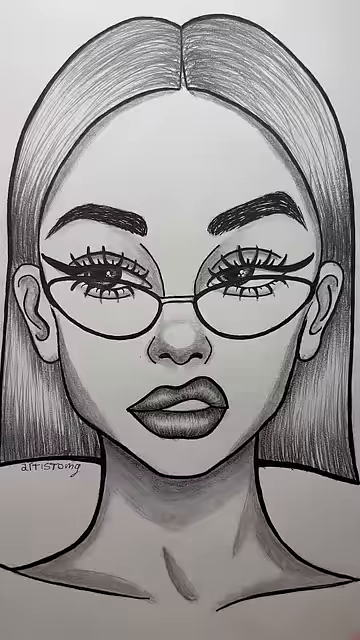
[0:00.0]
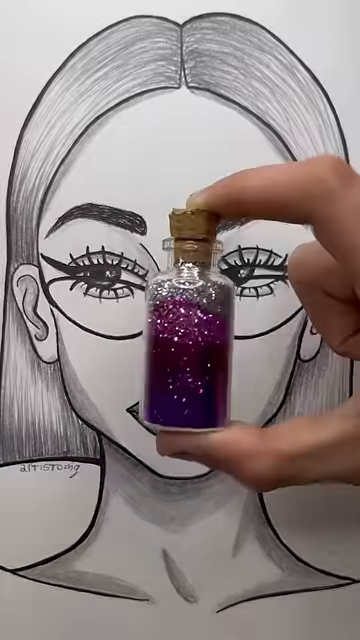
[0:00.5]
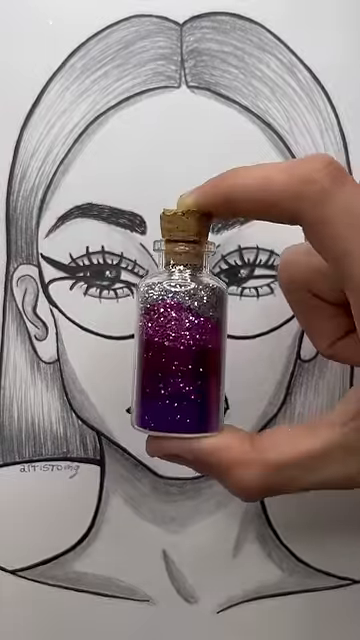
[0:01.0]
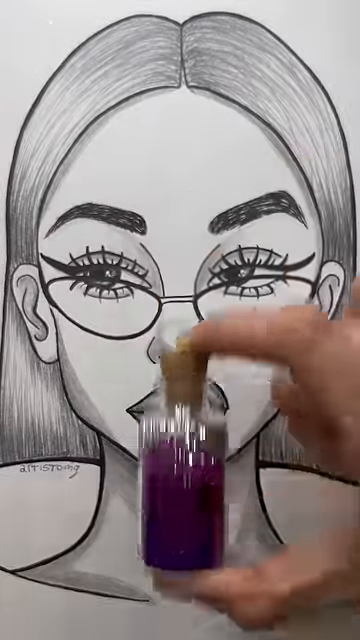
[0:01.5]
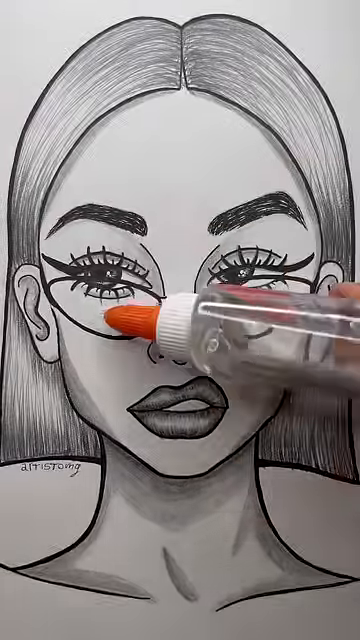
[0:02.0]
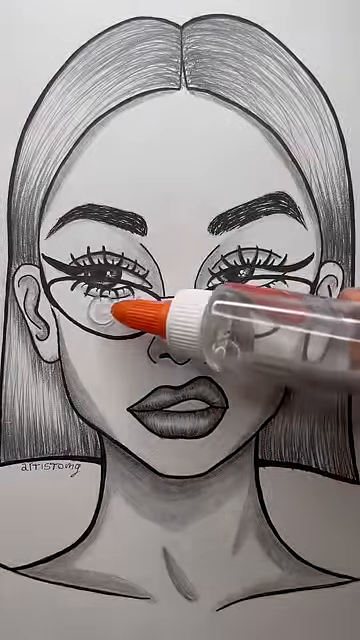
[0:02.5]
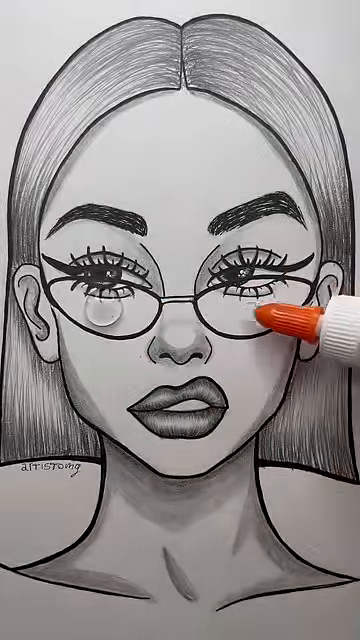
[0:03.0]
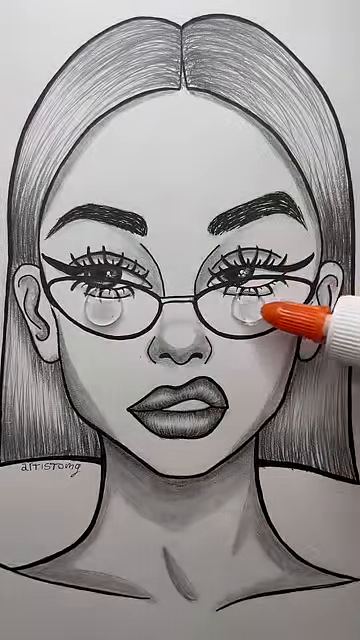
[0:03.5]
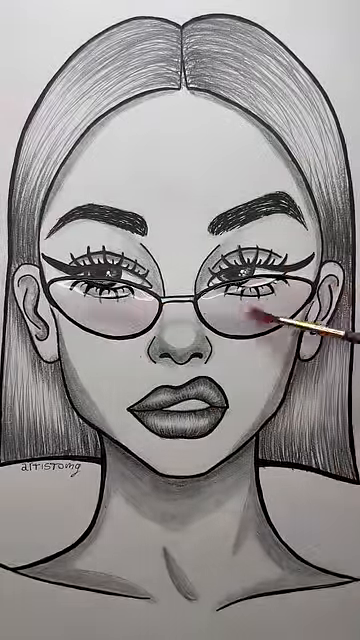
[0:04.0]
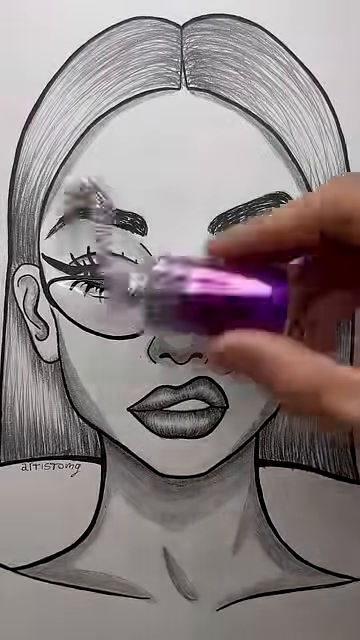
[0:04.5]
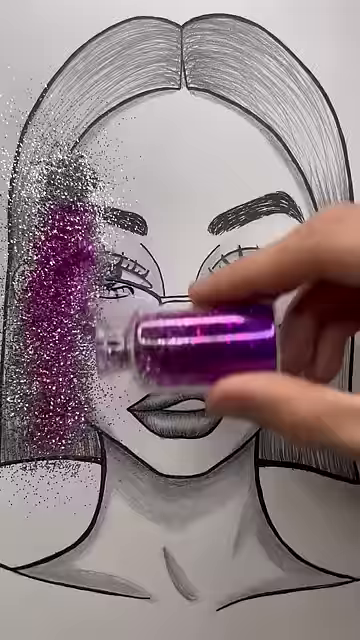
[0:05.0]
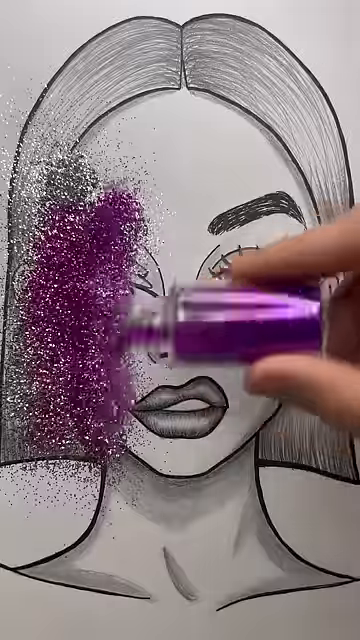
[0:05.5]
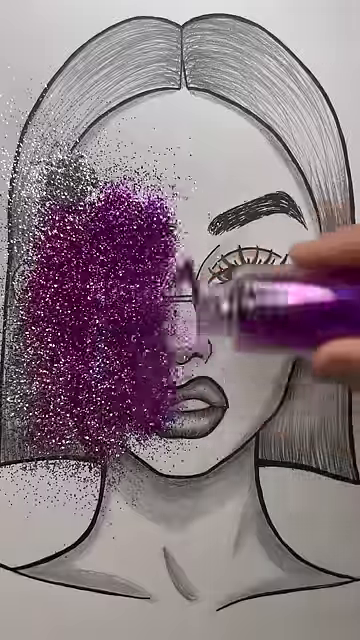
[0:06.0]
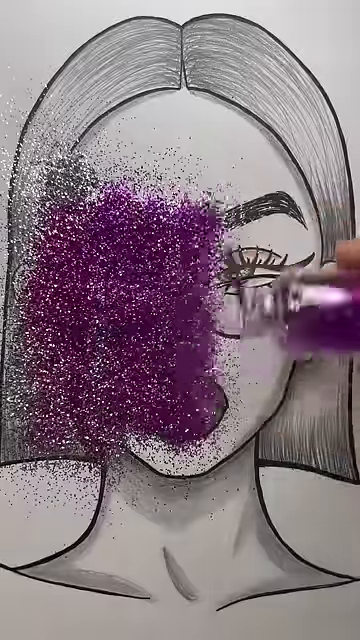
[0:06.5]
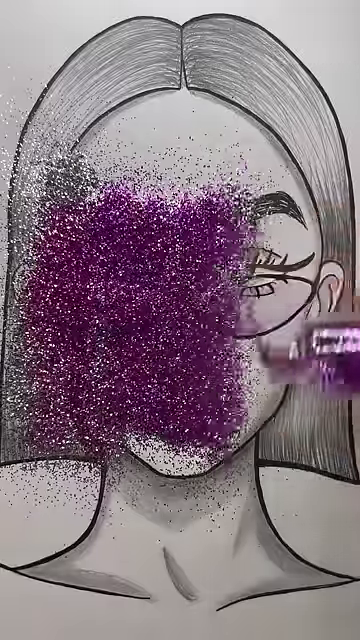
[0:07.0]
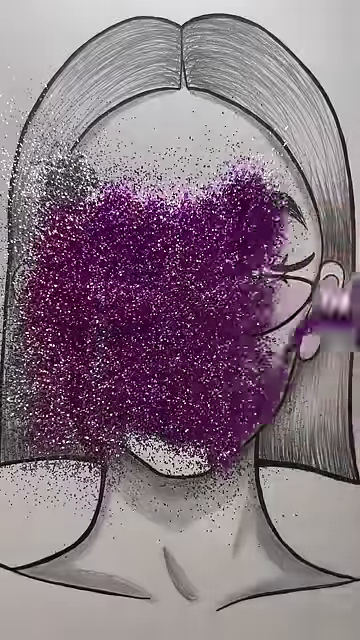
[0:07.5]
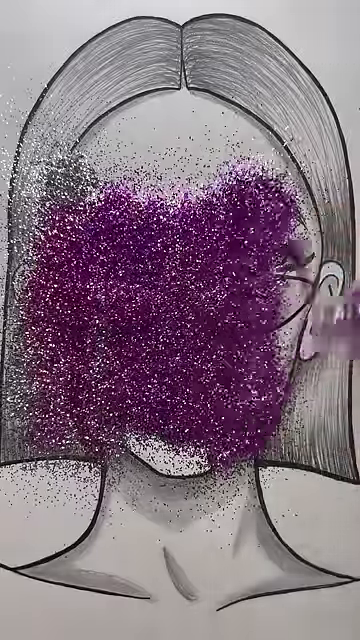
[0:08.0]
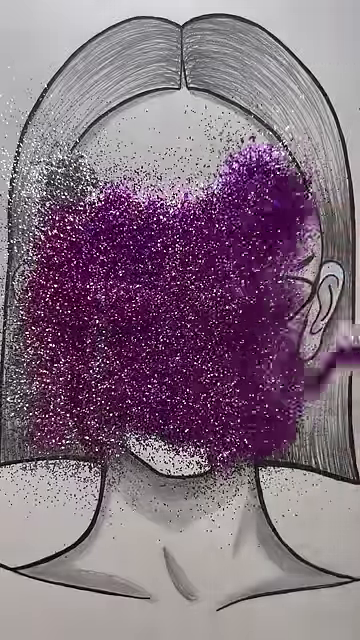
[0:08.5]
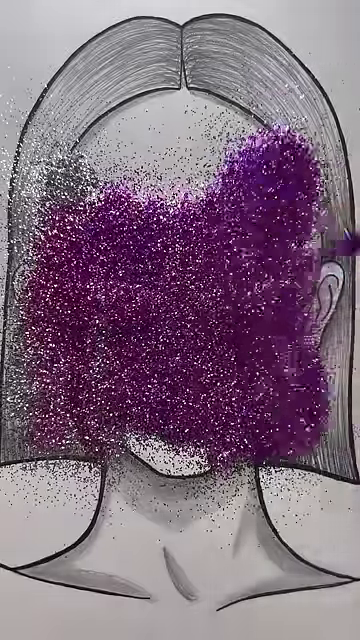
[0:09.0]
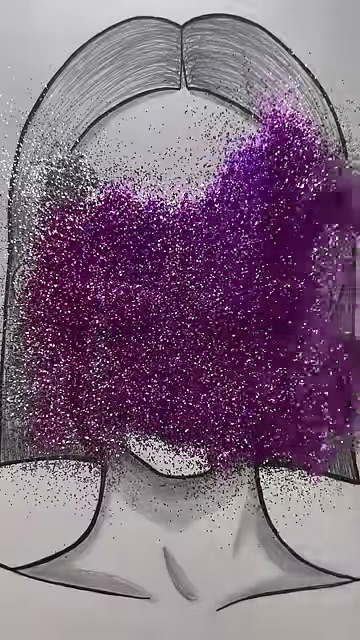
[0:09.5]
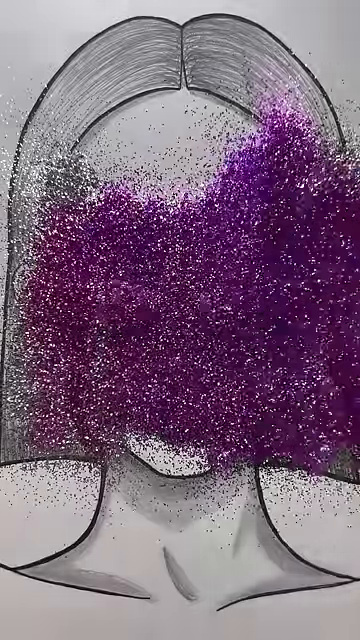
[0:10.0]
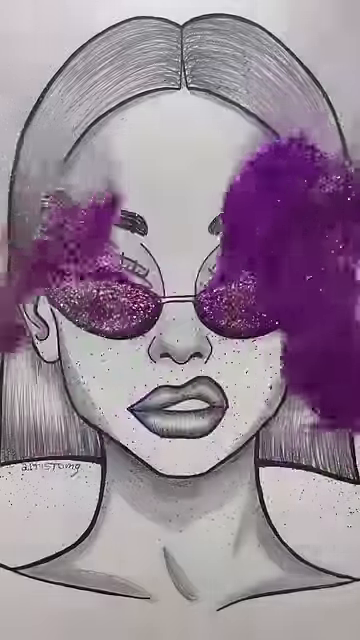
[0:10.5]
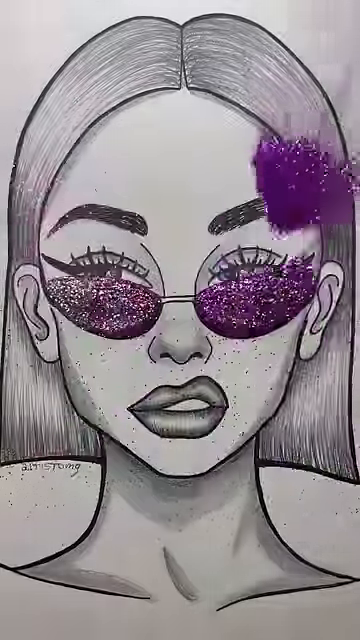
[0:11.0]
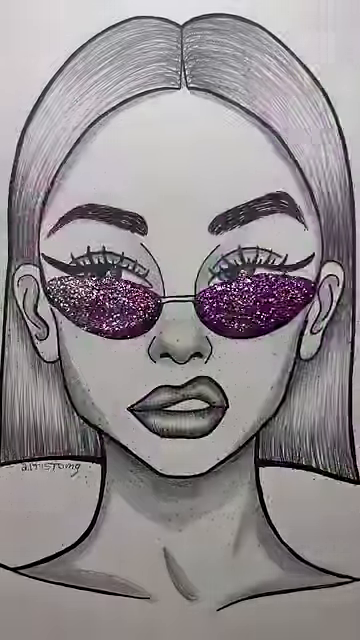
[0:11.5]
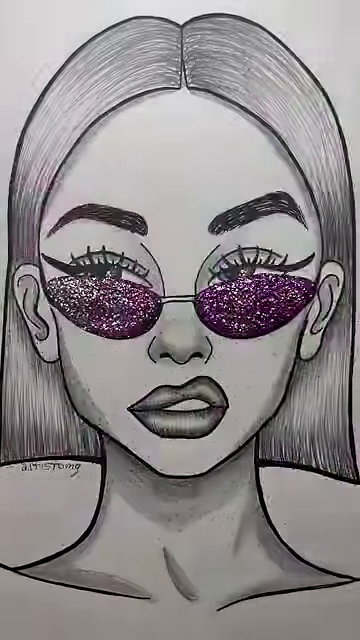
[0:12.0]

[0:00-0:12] A line drawing shows a woman with a short bob, framed as if someone had taken a picture of her; her neck and chin are visible, her mouth has a slight sneer, and she is looking off to the right. She is also wearing glasses. Someone puts a drop of clear Elmer's glue where the glasses are drawn, then uses a paintbrush to move the glue around so that it completely fills the eyeglasses area. Next, purple glitter is shaken all over the page so that it sticks to the glue, and the excess glitter is blown away. The only color left in the picture is her glasses, now purple glitter, while the rest of her remains a pencil drawing.